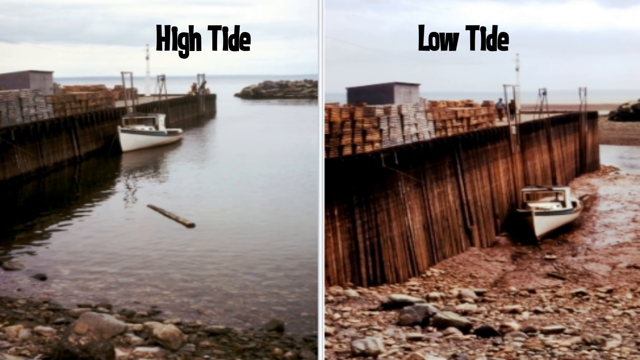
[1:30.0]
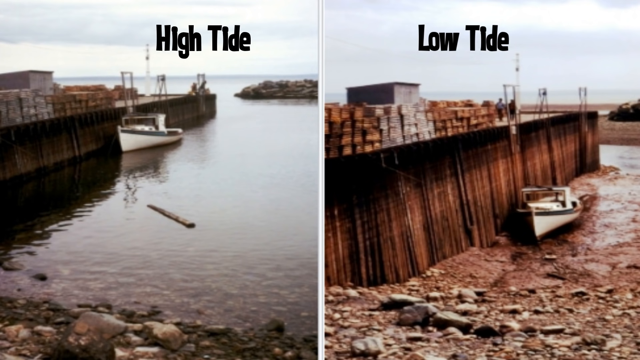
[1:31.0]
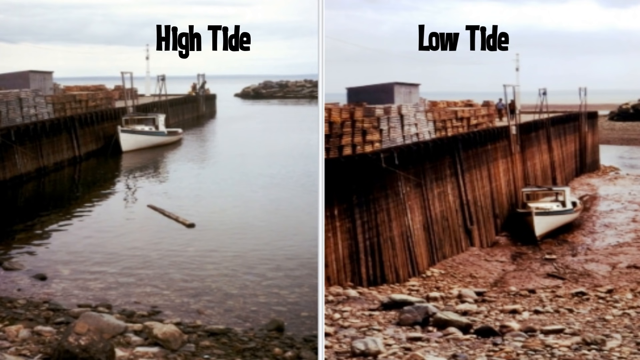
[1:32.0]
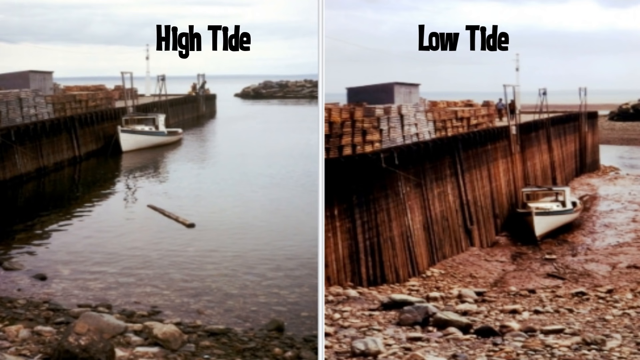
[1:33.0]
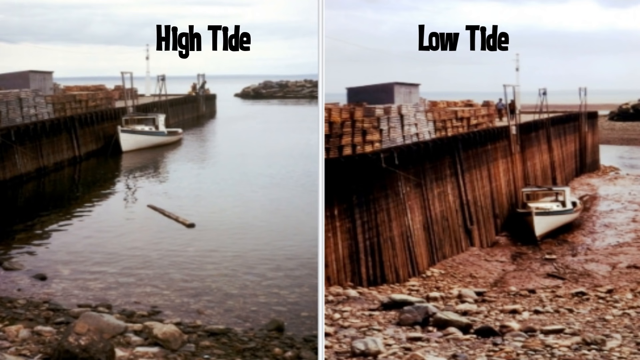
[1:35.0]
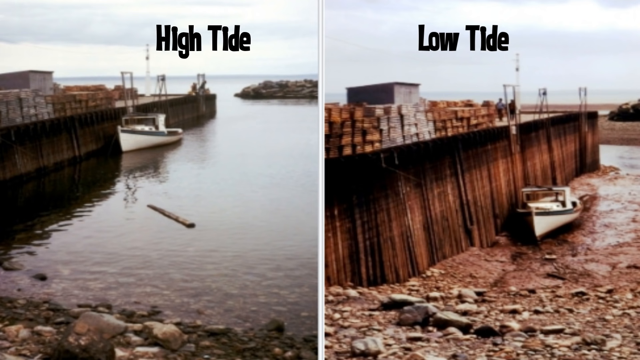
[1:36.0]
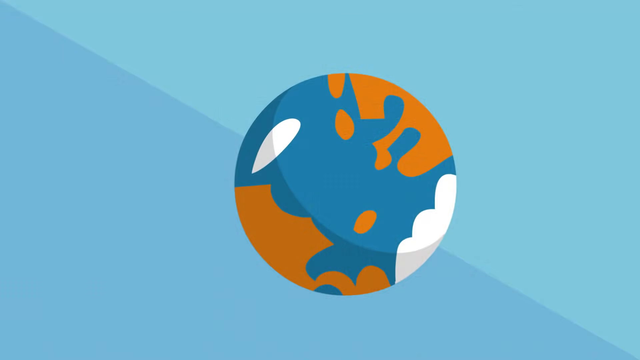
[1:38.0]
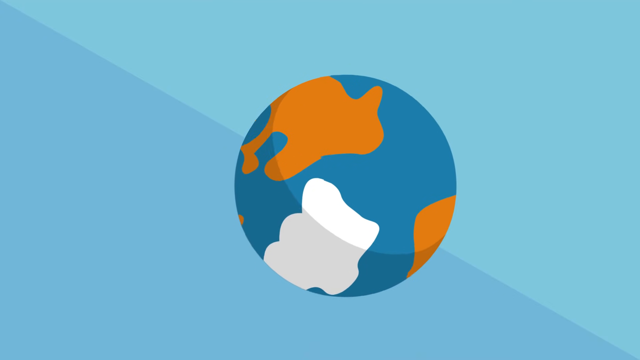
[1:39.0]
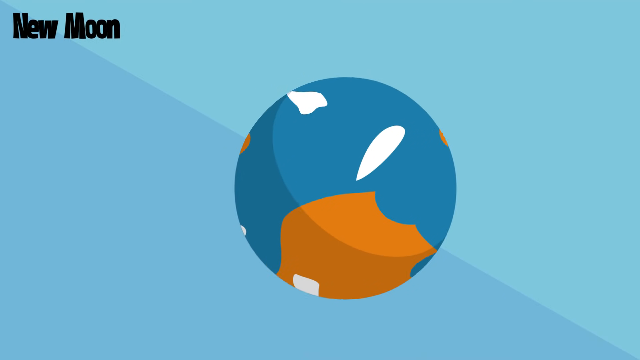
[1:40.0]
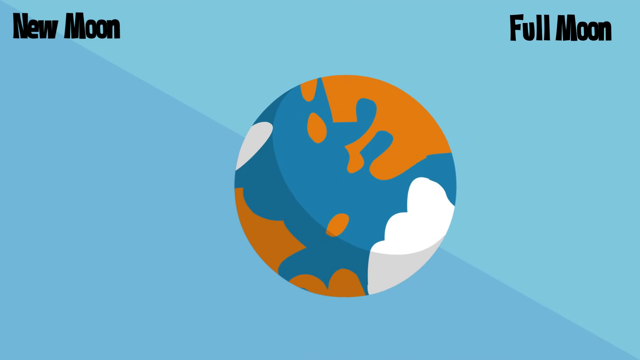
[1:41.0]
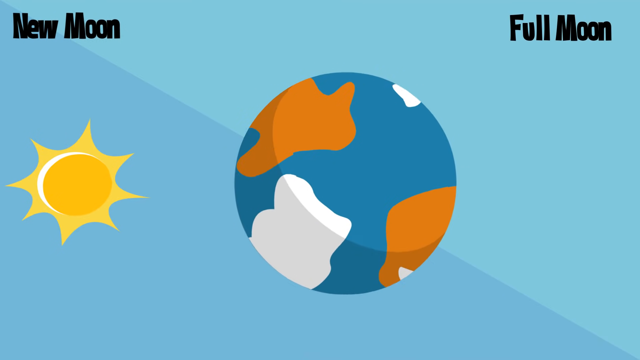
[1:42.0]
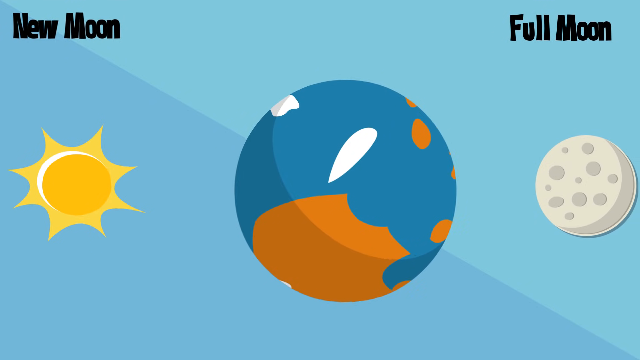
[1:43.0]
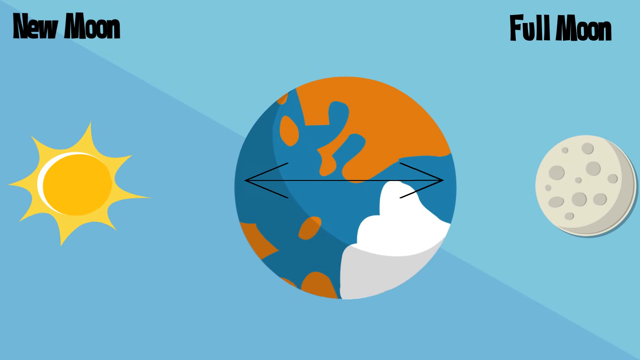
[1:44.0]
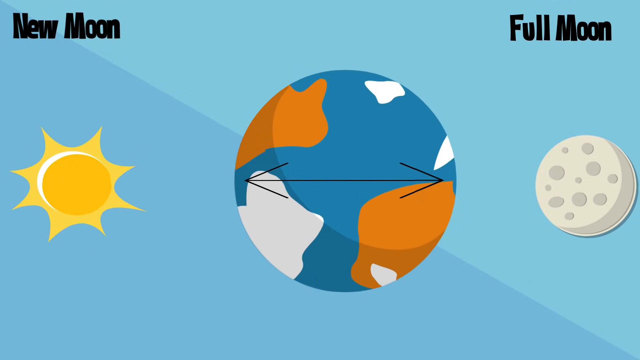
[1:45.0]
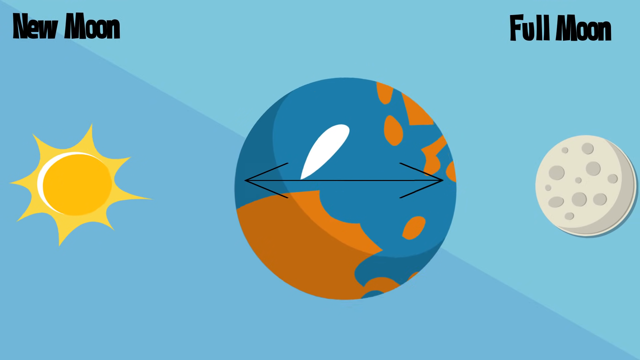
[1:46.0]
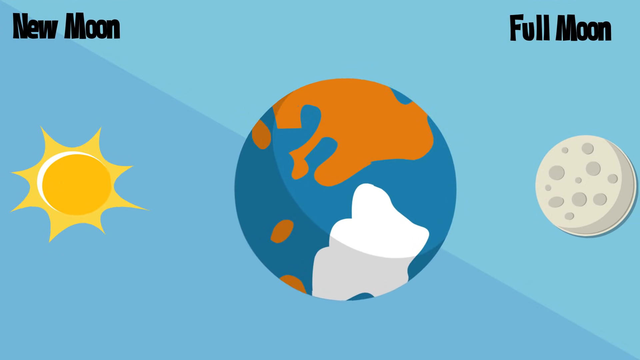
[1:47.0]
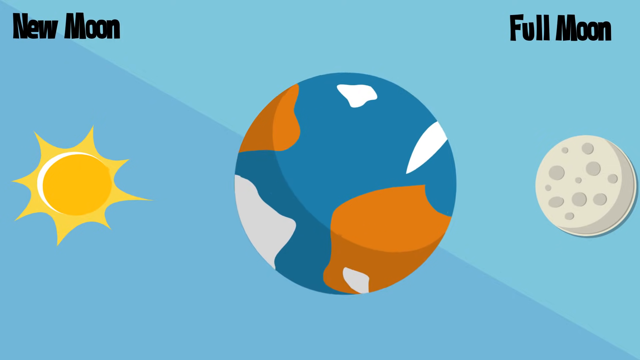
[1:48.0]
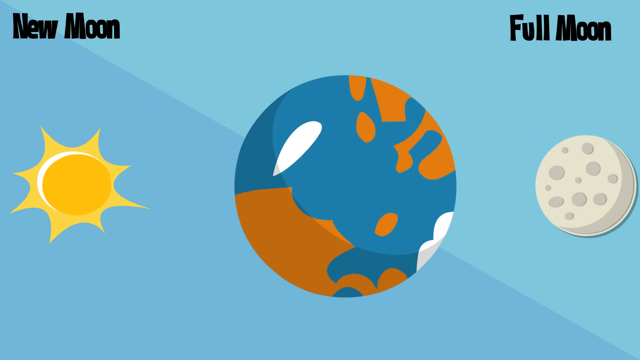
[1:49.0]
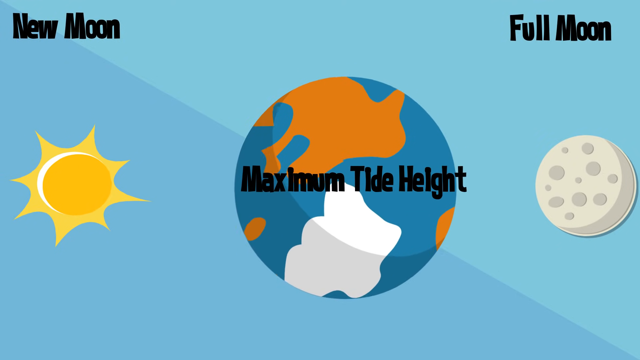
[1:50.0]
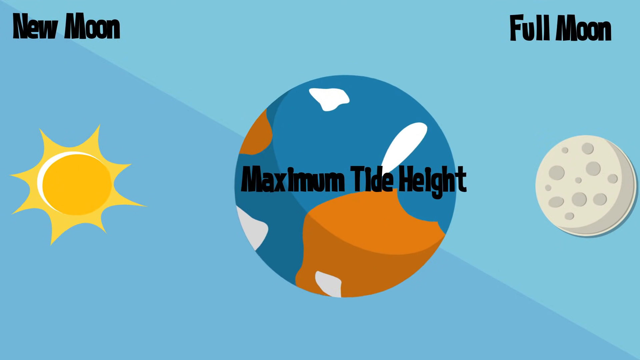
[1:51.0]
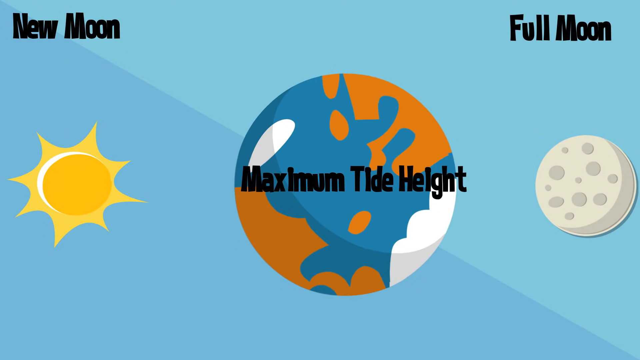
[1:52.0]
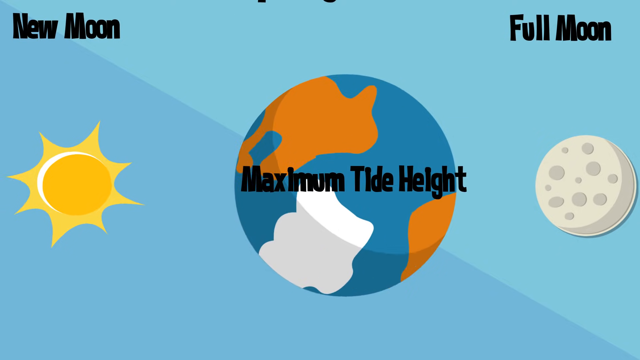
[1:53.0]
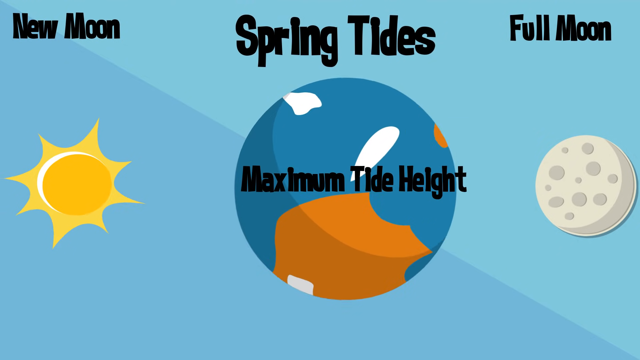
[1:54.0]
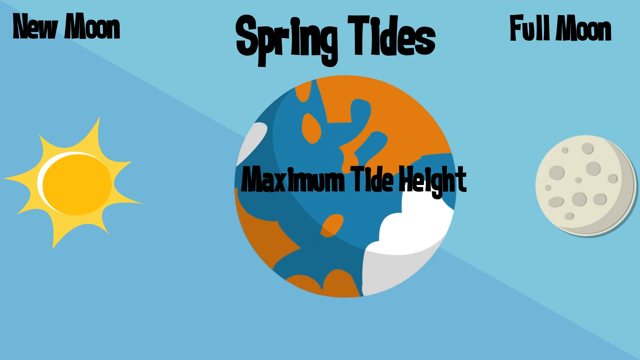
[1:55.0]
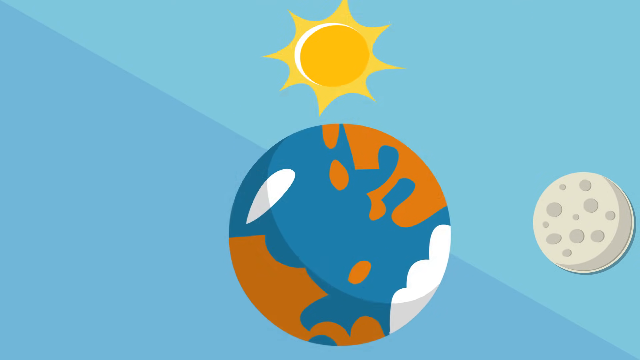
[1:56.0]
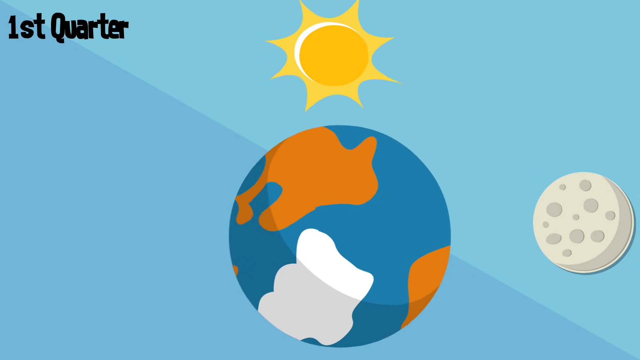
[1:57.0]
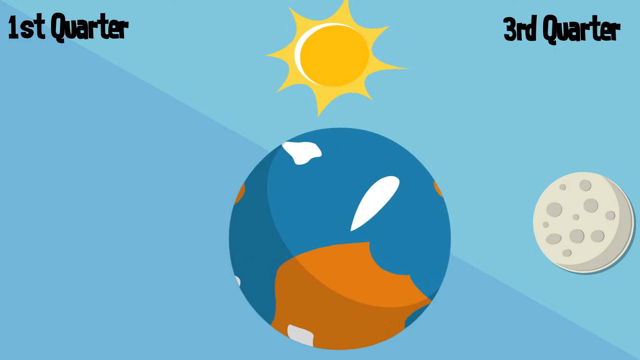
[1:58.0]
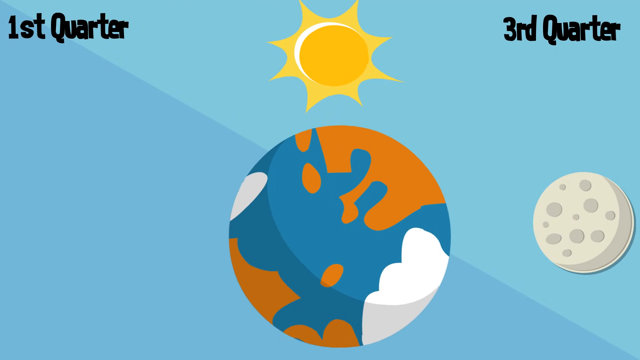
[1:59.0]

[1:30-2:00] The split screen of the two images continues, with the high tide example on the left and the low tide example on the right. The scene changes to the earth in the middle, spinning and rotating to the left. Two titles appear: "new moon" in the top left and "full moon" in the top right. An image of the sun appears on the left side, then an image of the moon on the right side. Two connected arrows in the center of the earth point in opposite directions, one toward the sun and the other toward the moon. The arrows disappear, the earth continues to rotate to the left, and a title appears in the middle of the earth that says "maximum tide height". As the earth continues to rotate, a title appears at the top center that says "spring tides". The scene changes to the earth in the center, a little more toward the bottom, with the sun at the top center above the earth and the moon to the right side of the earth. A title appears in the top left corner that says "first quarter" and another in the top right corner that says "third quarter". The earth continues to spin toward its left side.